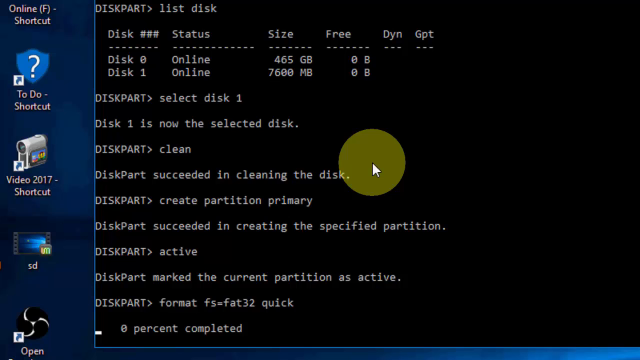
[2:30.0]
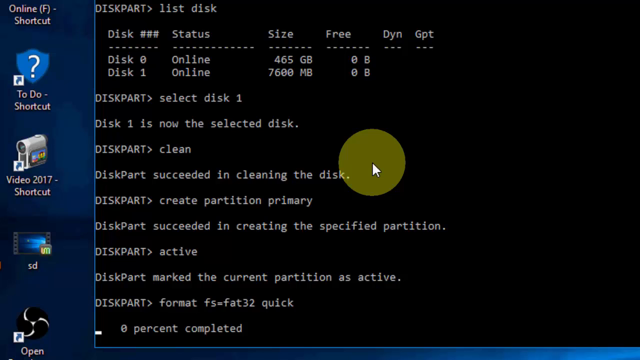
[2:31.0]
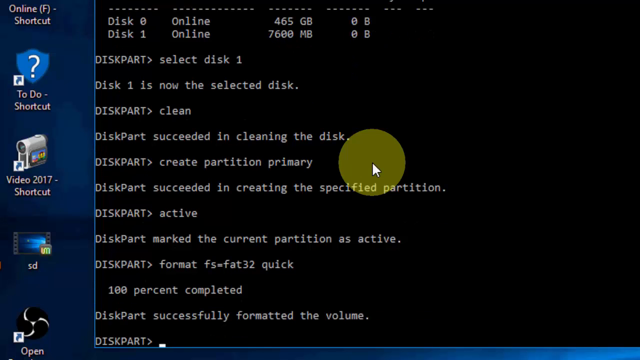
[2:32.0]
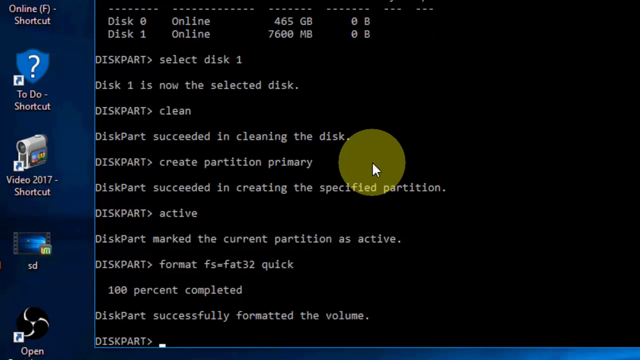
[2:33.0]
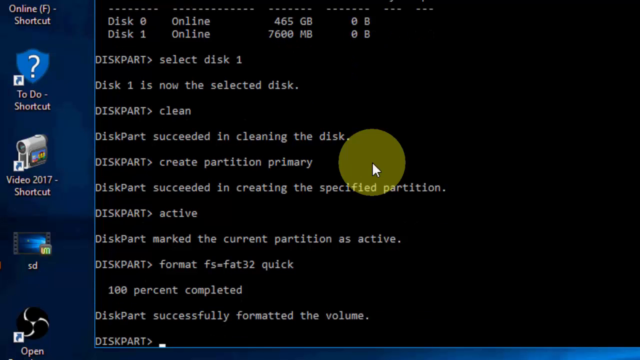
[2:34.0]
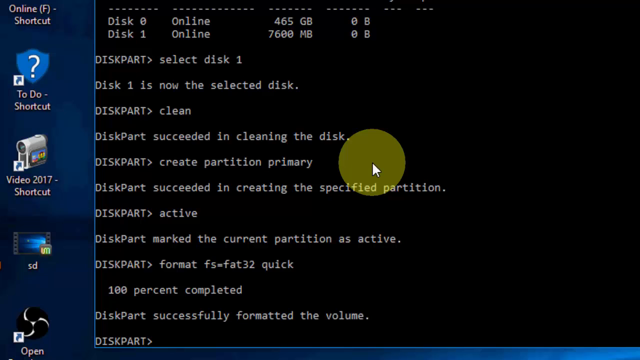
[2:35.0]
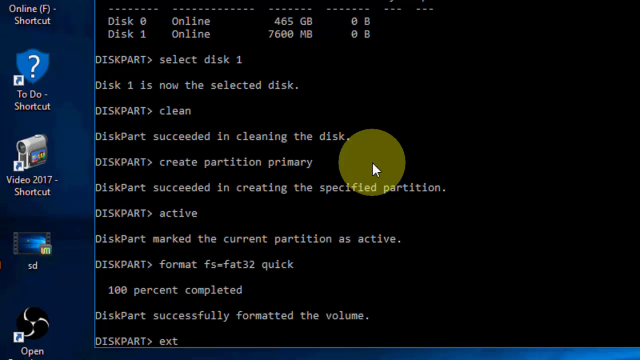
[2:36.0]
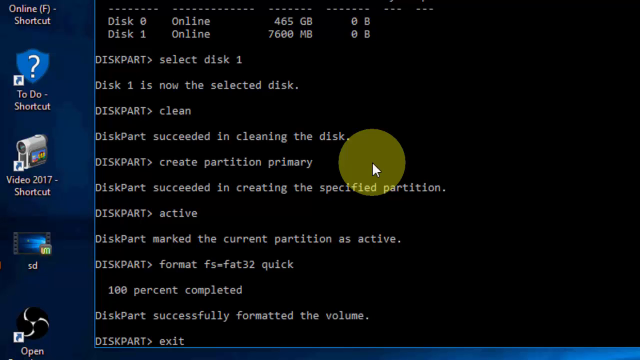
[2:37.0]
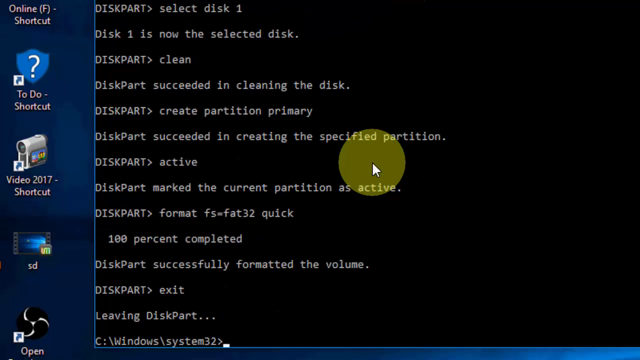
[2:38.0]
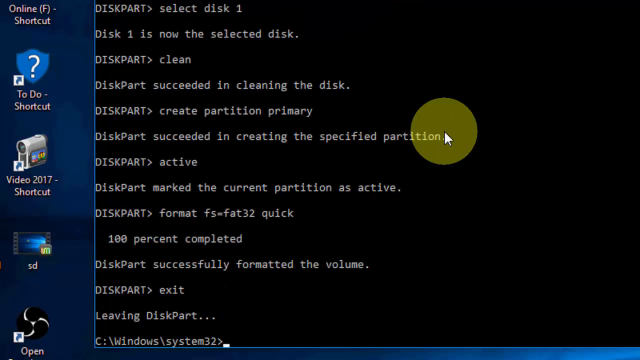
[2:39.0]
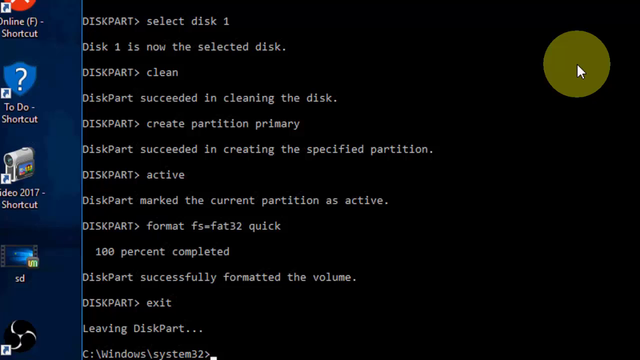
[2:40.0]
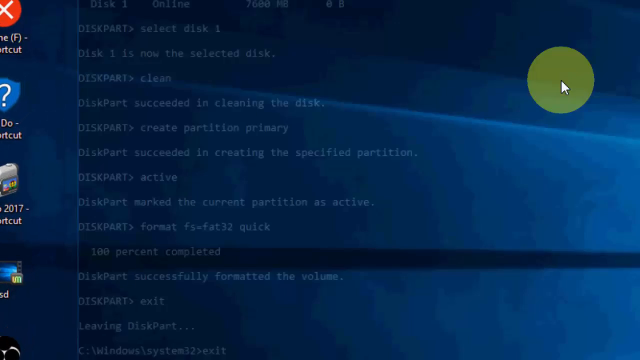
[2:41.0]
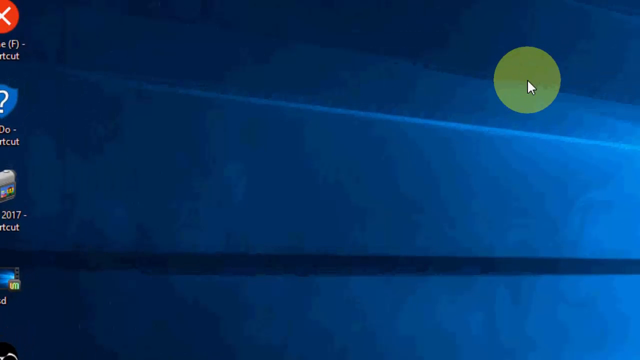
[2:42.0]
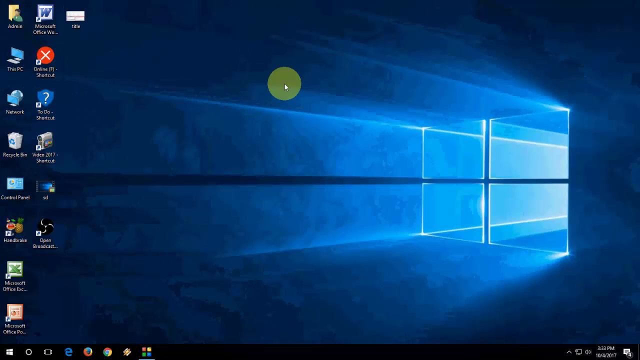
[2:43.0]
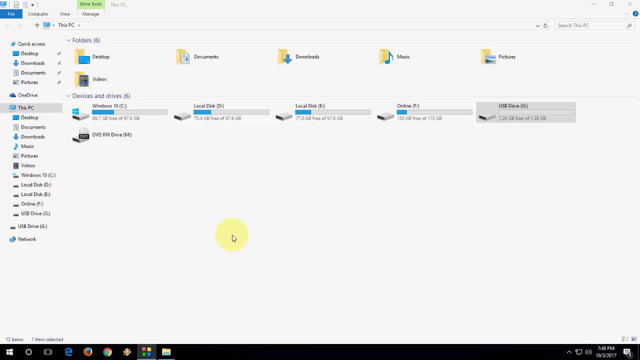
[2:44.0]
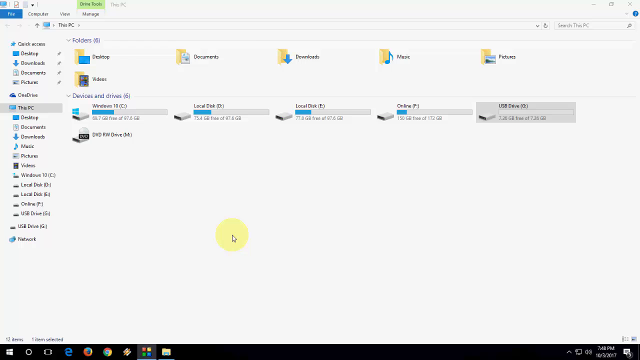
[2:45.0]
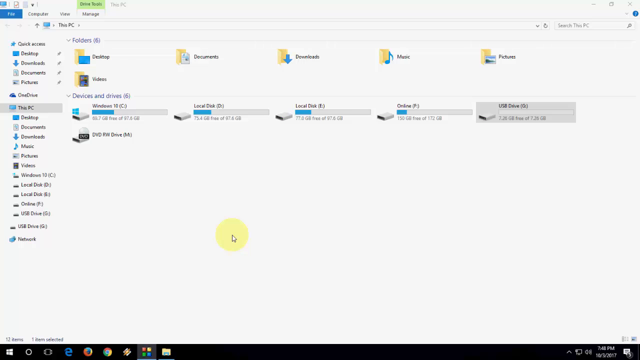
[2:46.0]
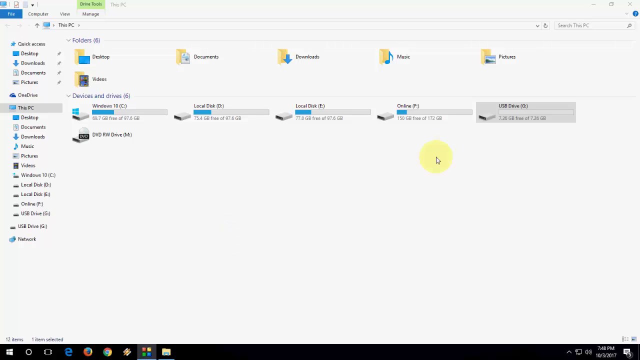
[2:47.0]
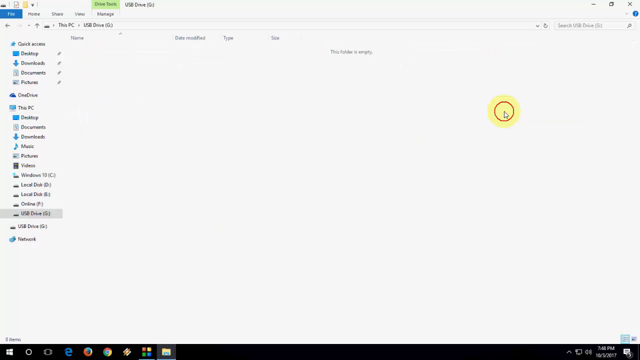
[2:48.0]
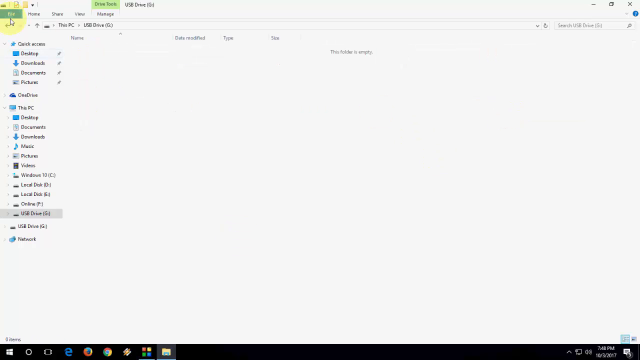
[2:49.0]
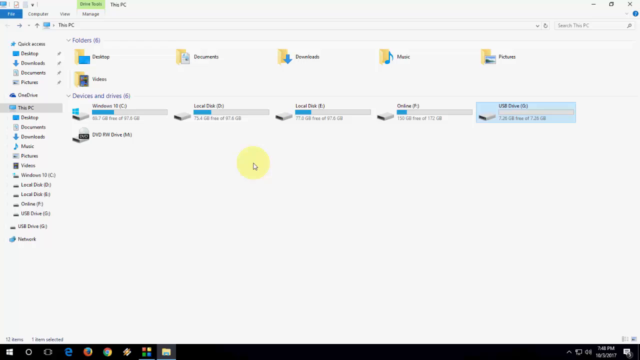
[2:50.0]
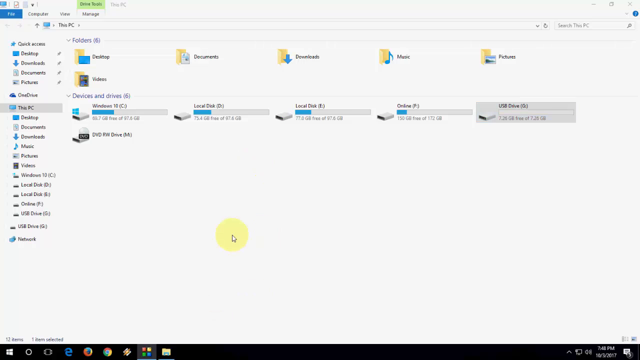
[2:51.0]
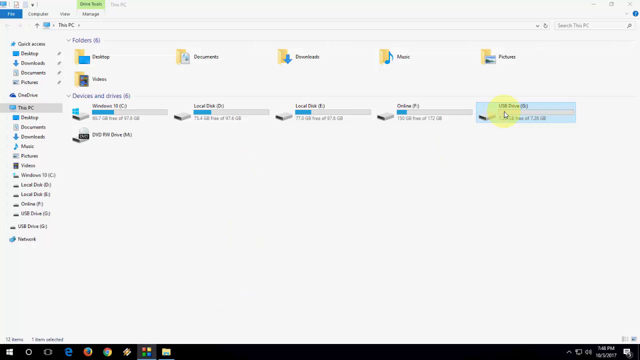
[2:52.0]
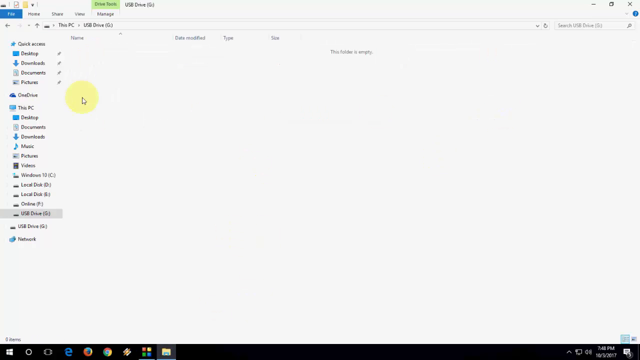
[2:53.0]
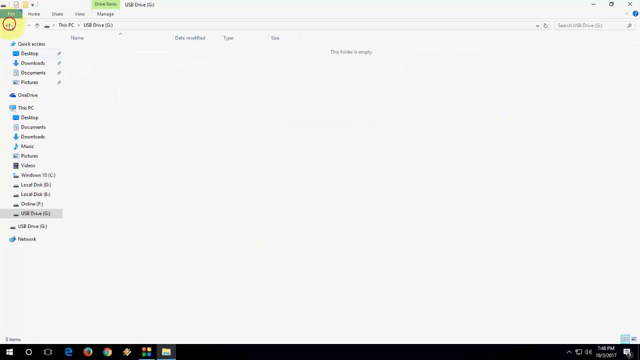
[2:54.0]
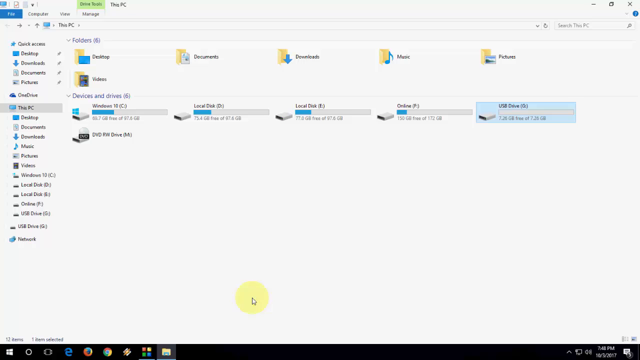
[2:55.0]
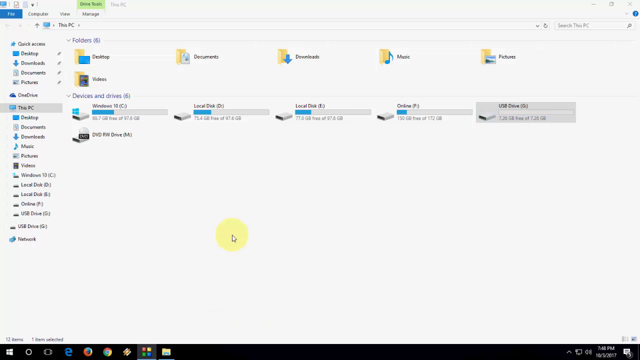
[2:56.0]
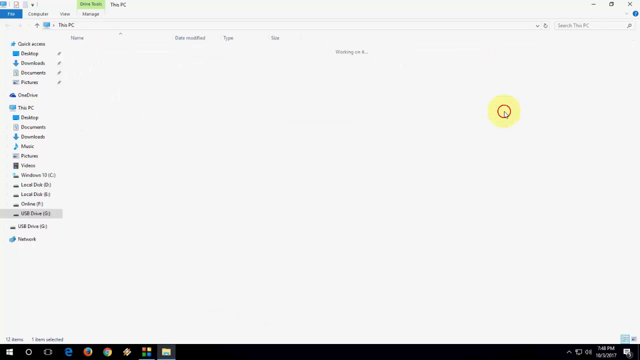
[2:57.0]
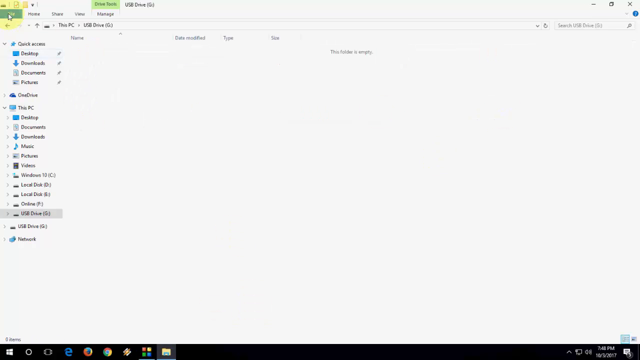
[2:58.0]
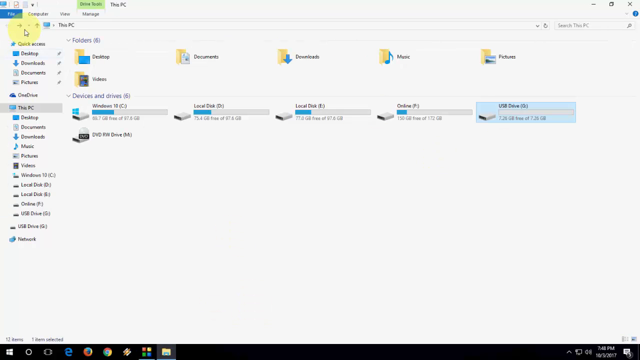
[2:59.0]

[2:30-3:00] The person is still in the administrator command prompt, waiting for the quick FAT32 format to finish. It goes from "0% completed" to "100% completed", and below it says "DiskPart successfully formatted the volume." The person types "exit" and presses enter, and it says "Leaving DiskPart...". The camera shifts to the right, showing the person click close on the command prompt. The person then zooms out and opens This PC, where USB drive G is completely empty. They double-click into it, showing nothing inside, and go in and out of it multiple times to verify that there are no files in it and that all of the drive's gigabytes are free.